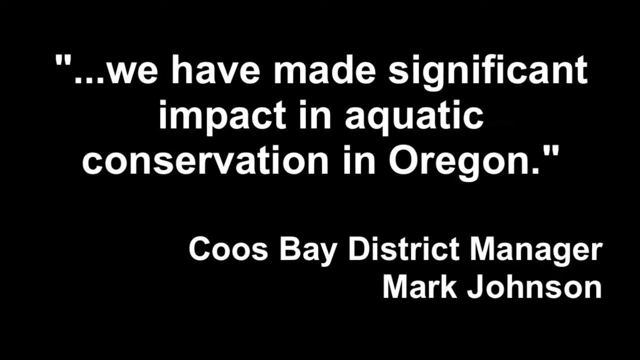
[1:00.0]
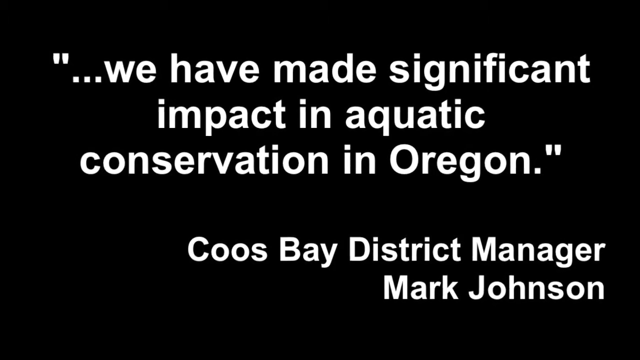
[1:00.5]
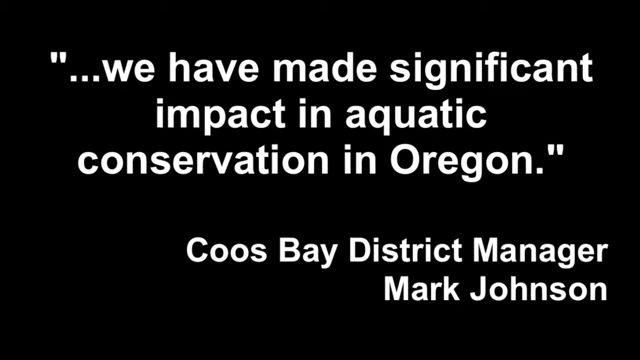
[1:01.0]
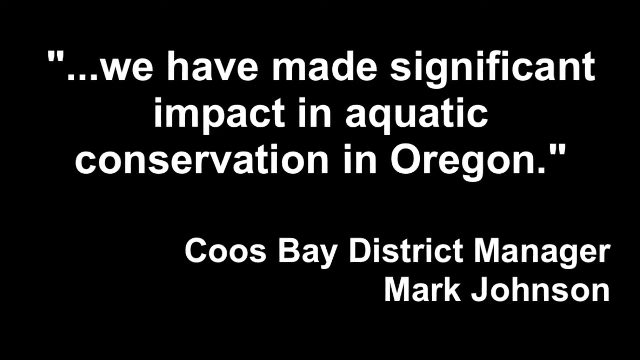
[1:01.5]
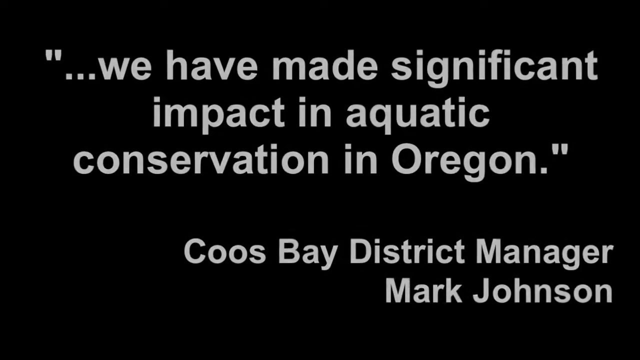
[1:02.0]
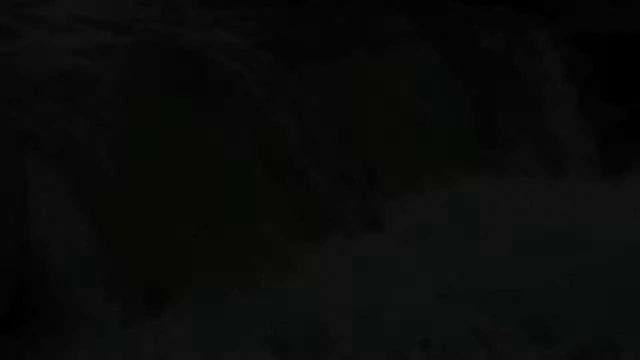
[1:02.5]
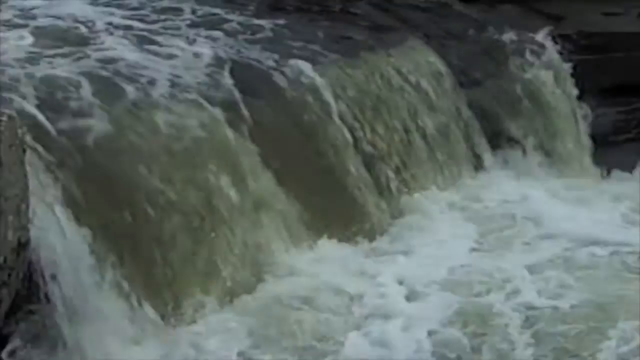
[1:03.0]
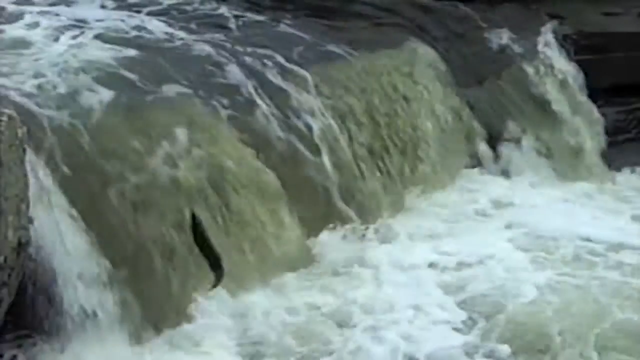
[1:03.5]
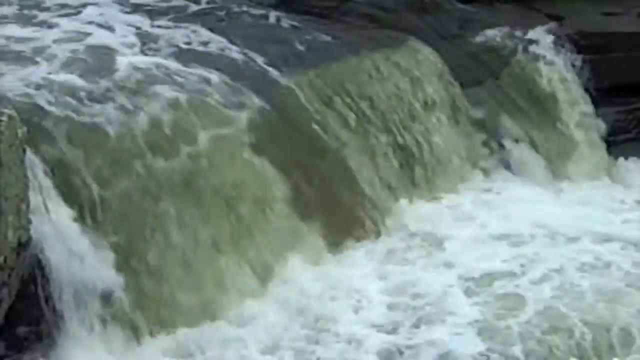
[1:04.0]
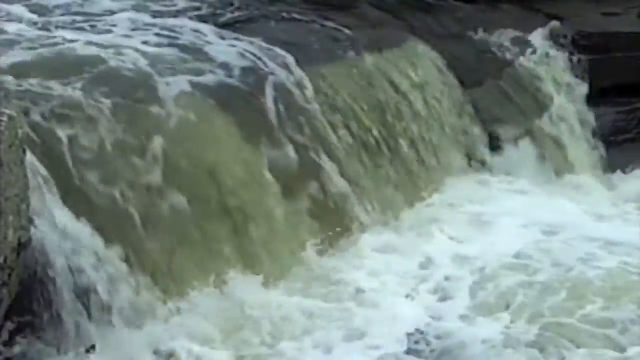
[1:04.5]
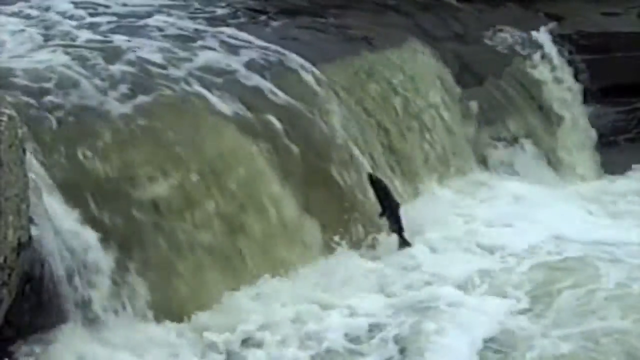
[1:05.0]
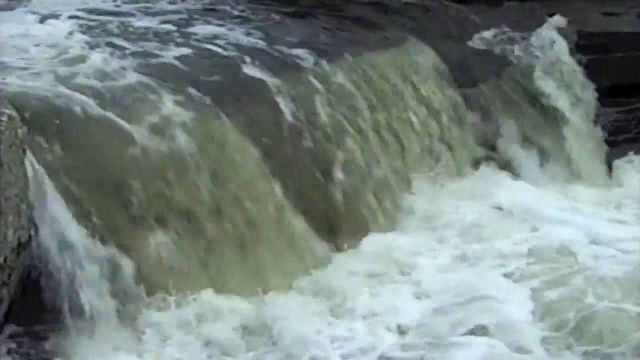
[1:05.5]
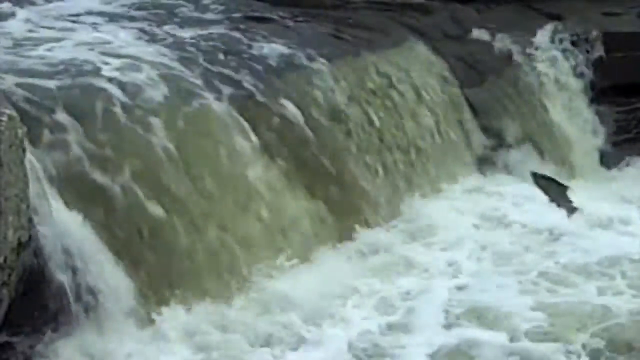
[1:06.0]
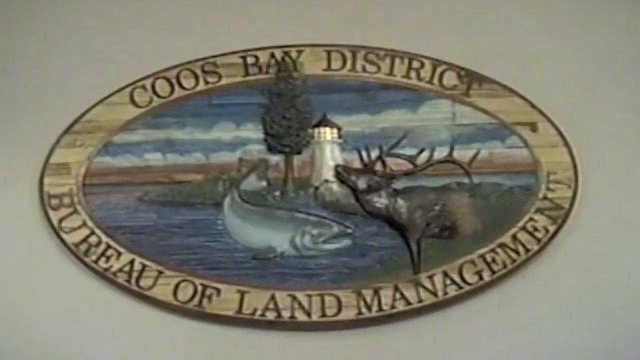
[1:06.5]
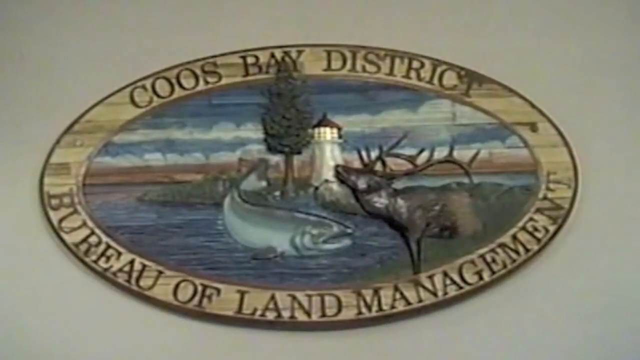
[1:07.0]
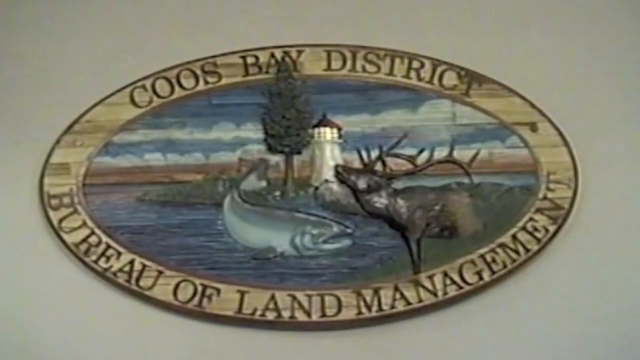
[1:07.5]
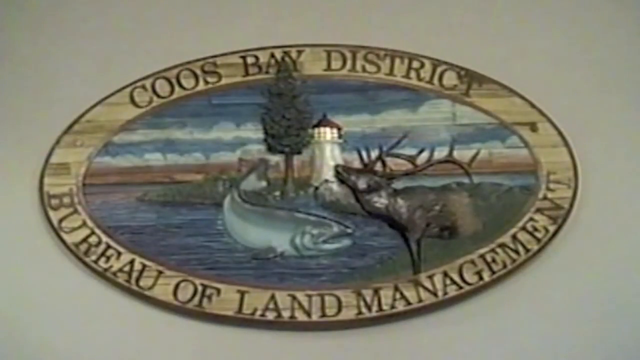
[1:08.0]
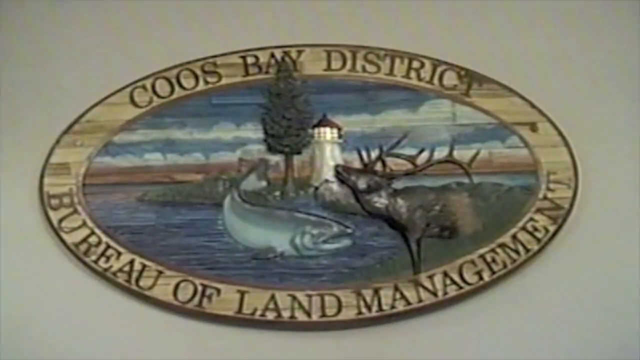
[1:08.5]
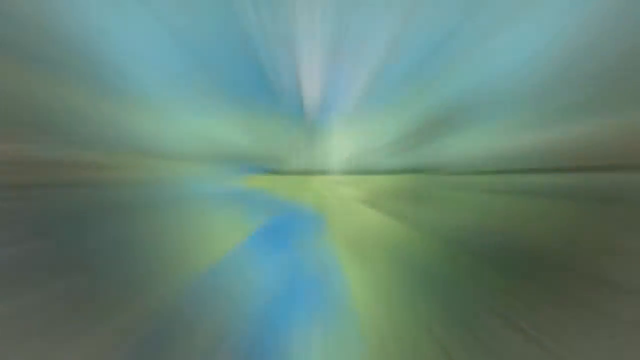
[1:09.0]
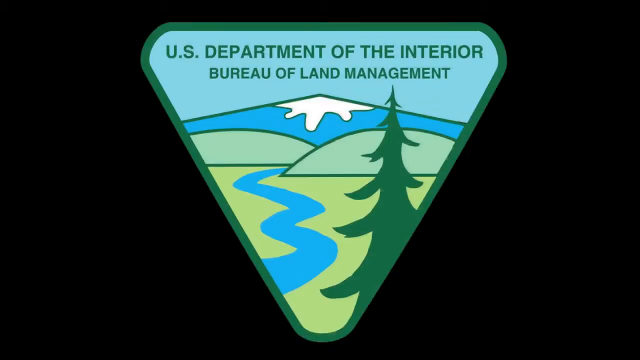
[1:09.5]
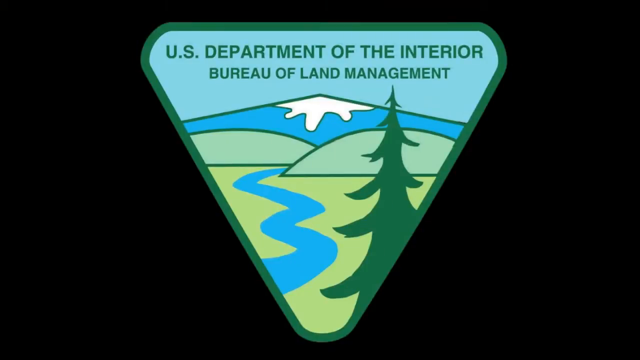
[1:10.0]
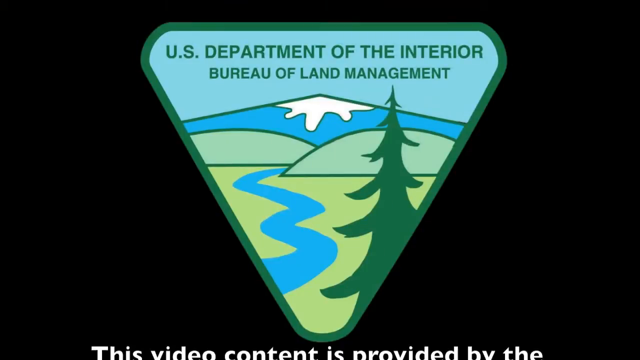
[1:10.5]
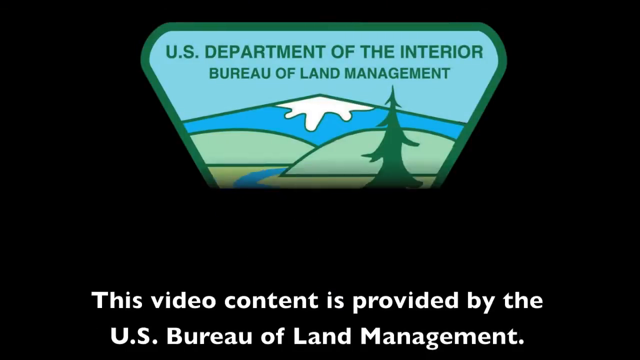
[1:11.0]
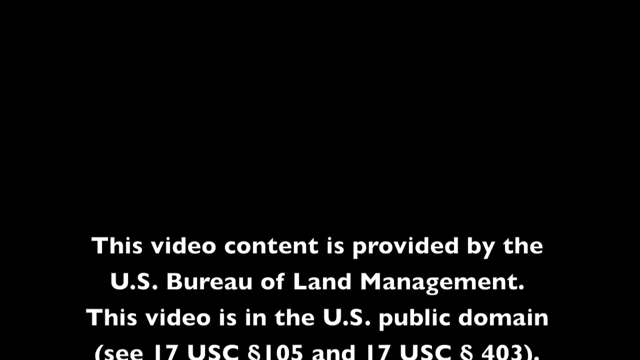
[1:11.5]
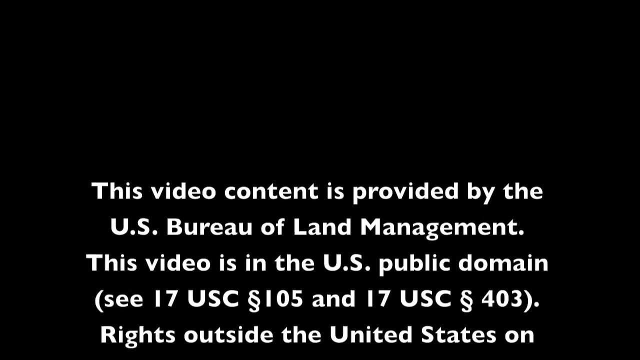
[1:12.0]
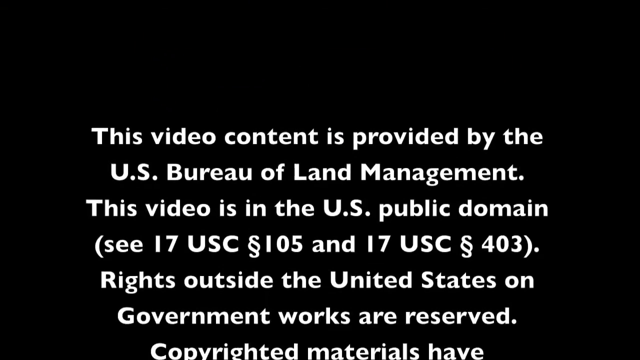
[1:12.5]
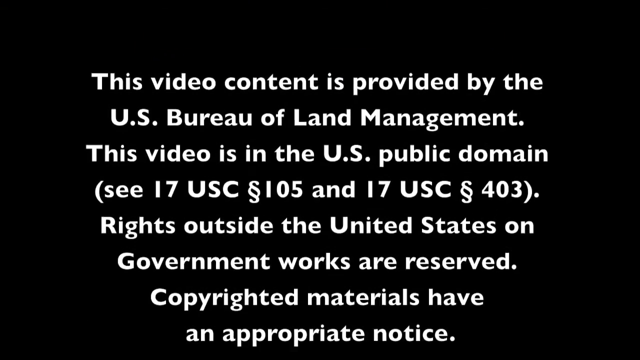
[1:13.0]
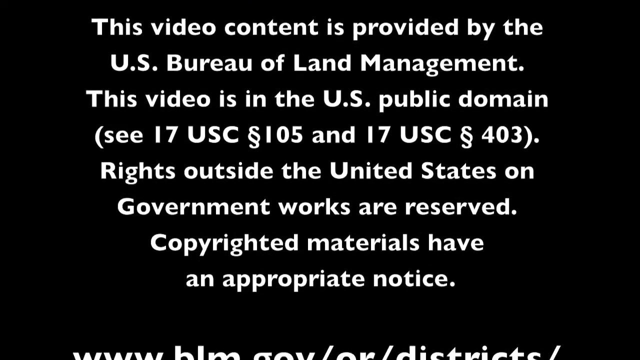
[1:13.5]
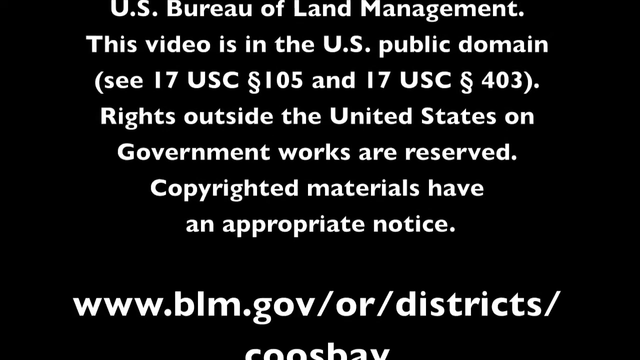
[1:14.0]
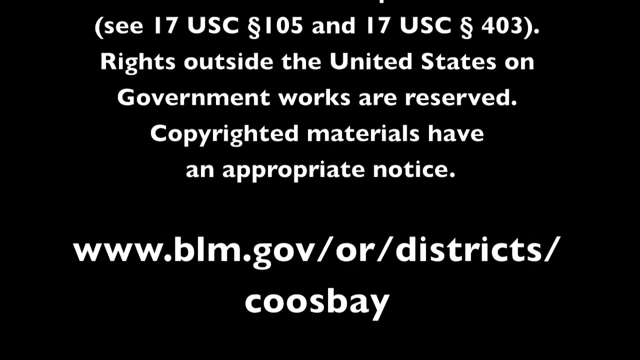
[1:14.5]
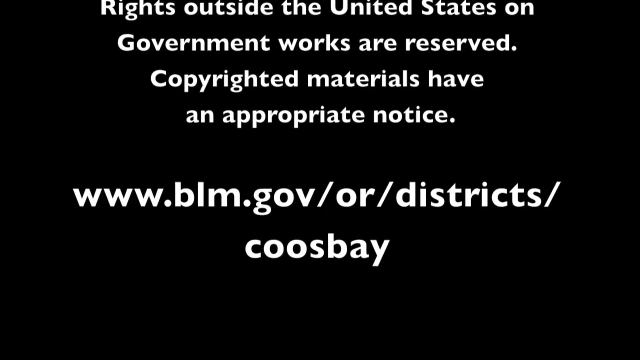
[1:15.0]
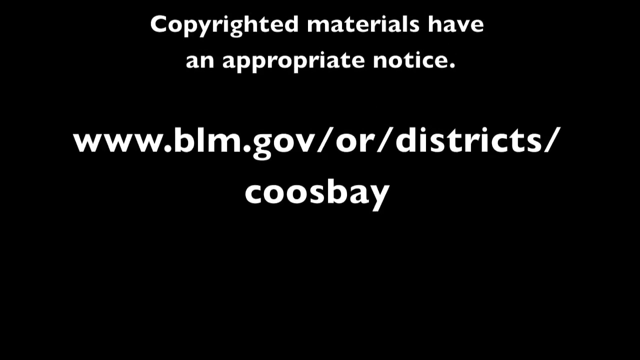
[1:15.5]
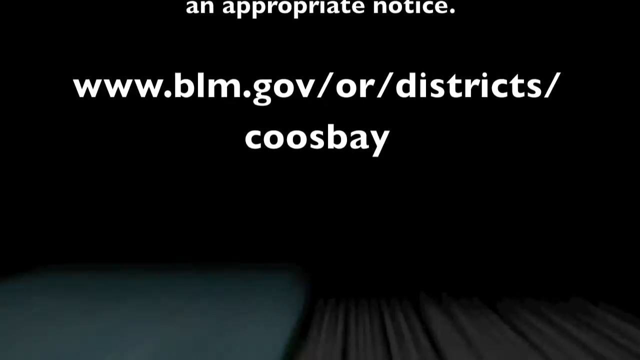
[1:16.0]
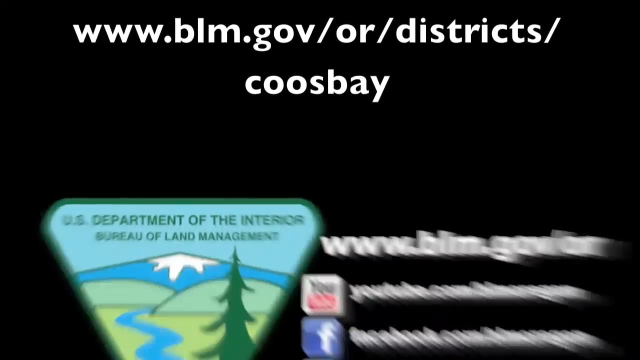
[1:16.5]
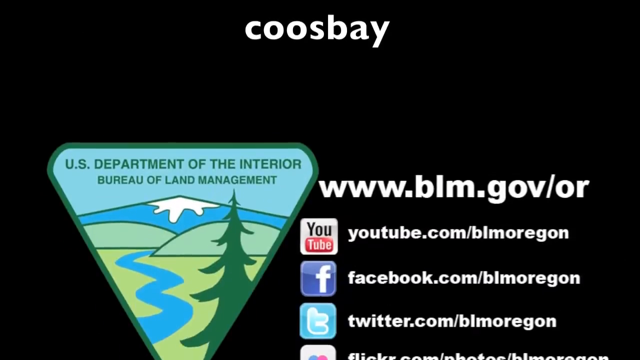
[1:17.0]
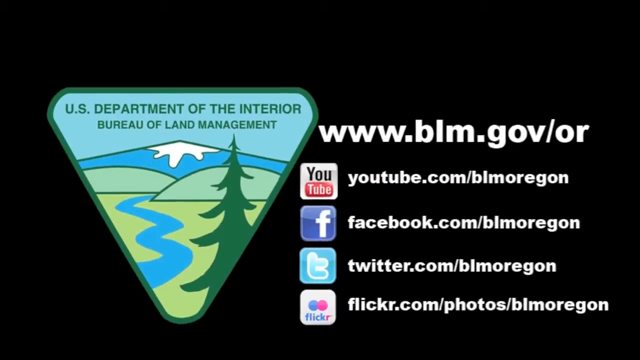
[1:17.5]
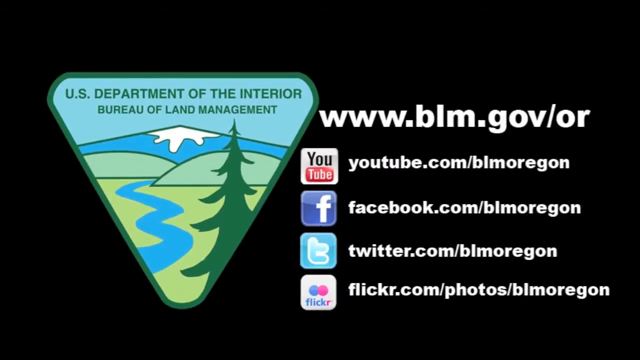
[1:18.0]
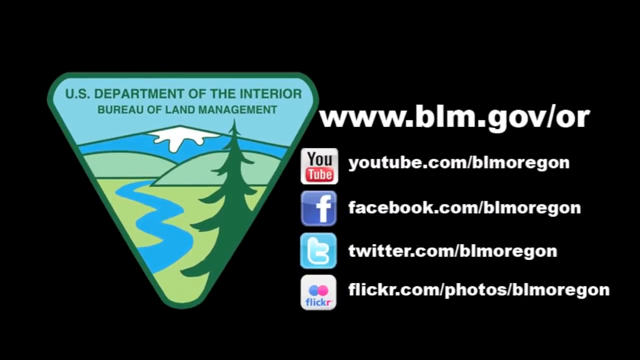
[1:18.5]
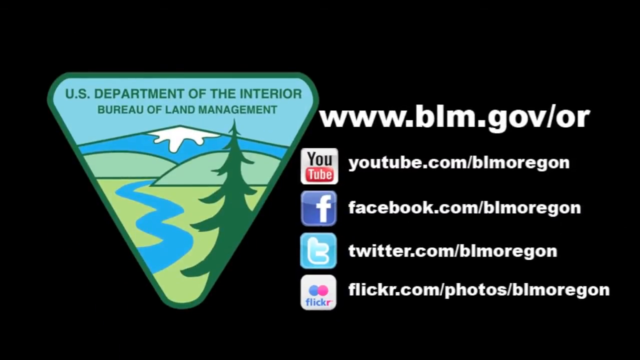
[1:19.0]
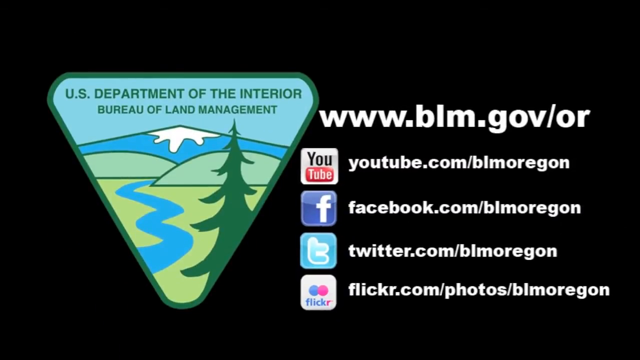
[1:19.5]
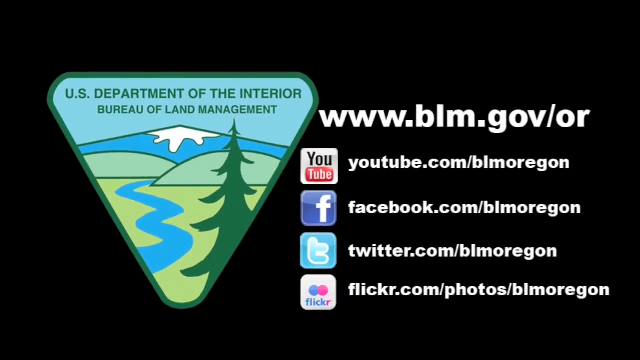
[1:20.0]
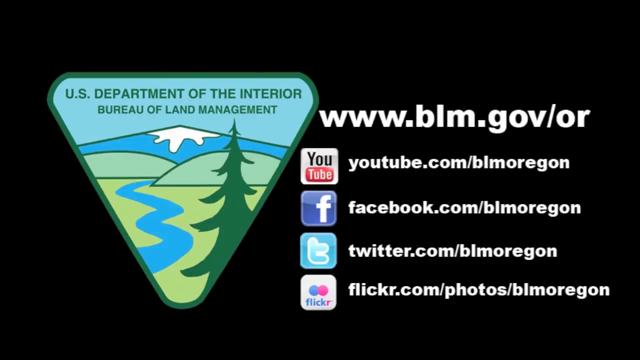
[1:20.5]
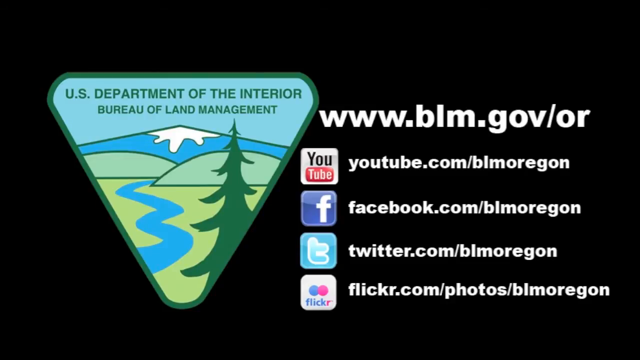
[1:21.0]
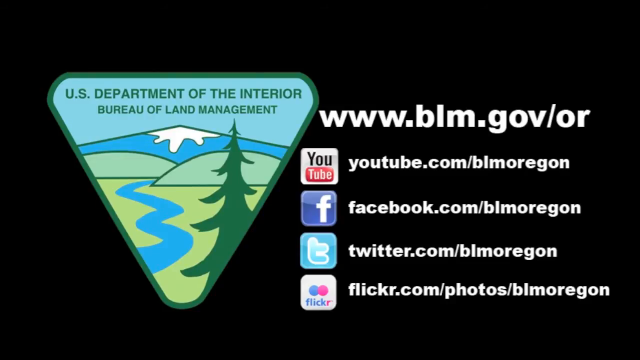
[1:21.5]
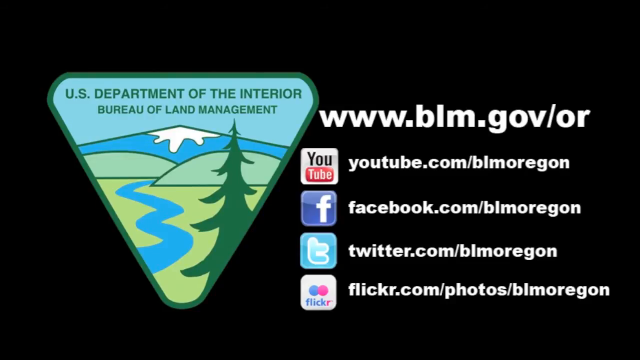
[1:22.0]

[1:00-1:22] White text on a black background reads "we have made significant impact in aquatic conservation in Oregon. Coos Bay District Manager Mark Johnson." The text fades away to a shot of a very short waterfall, with water flowing down into a river. The water is white and green, and some fish can be seen swimming up the river stream. The video cuts to the Coos Bay District Bureau of Land Management seal, which has a wooden border and a deer or elk and a sea bass painted in the middle, along with a lighthouse and a tree. Next comes the triangular U.S. Department of the Interior Bureau of Land Management sign seen earlier. Finally, white text scrolls up reading "this video content is provided by the US Bureau of Land Management. This video is in the US public domain," citing 17 USC 105 and 17 USC 403, followed by "Rights outside the United States on government works are reserved. Copyrighted materials have an appropriate notice."